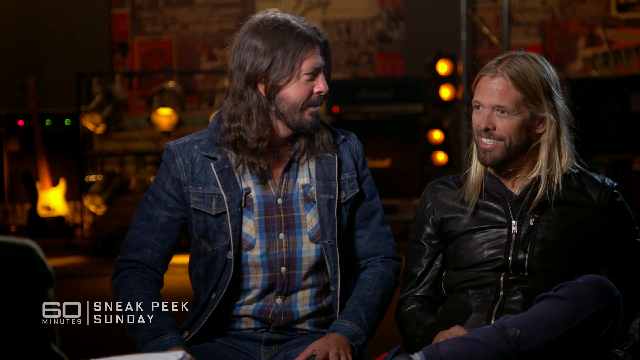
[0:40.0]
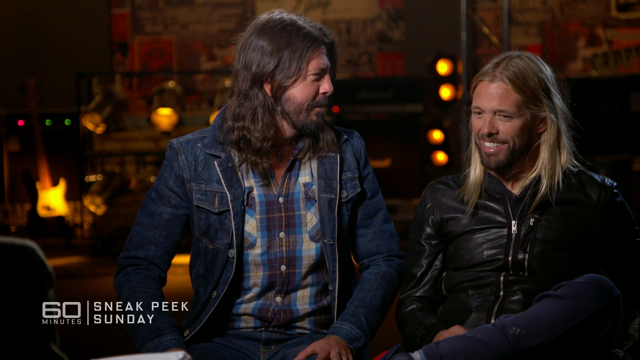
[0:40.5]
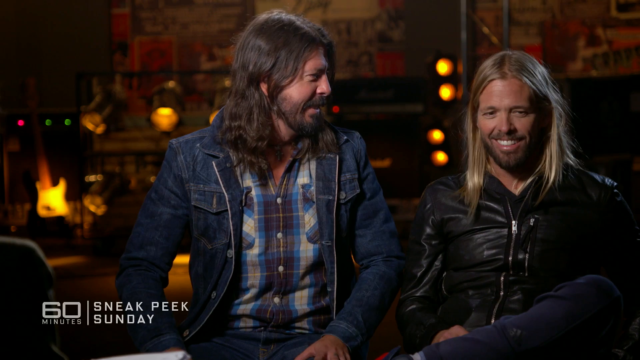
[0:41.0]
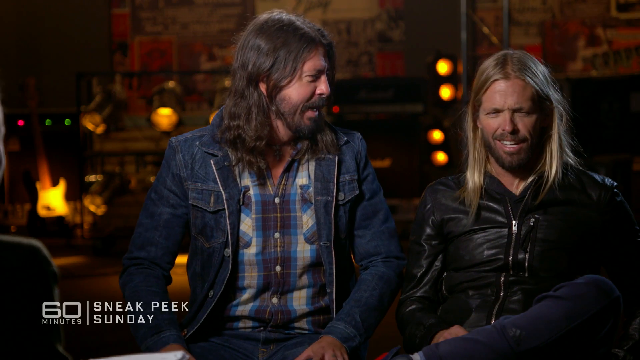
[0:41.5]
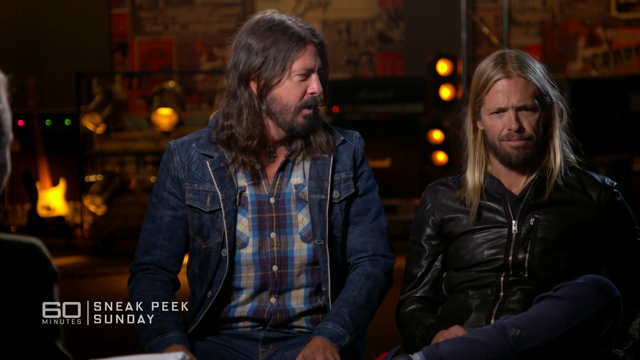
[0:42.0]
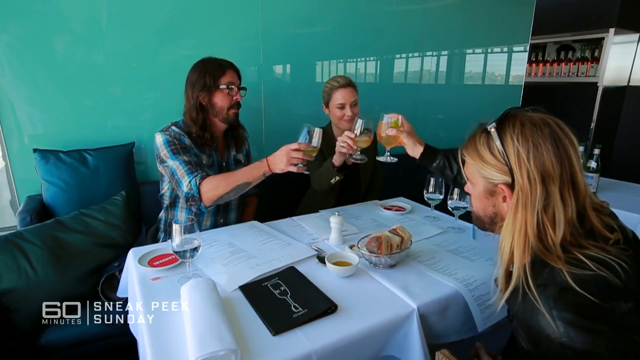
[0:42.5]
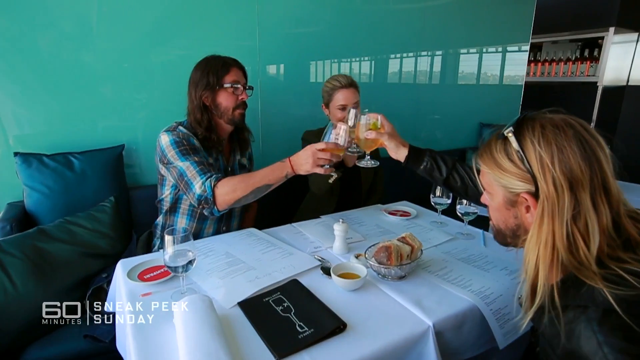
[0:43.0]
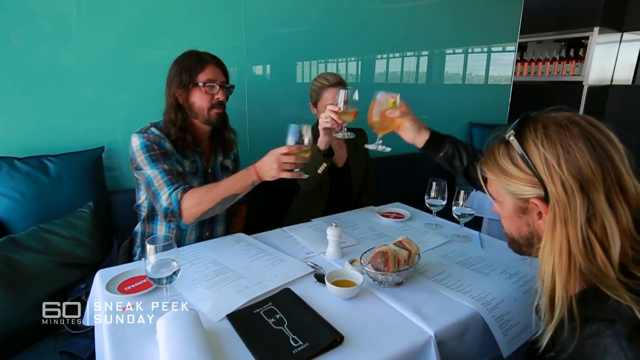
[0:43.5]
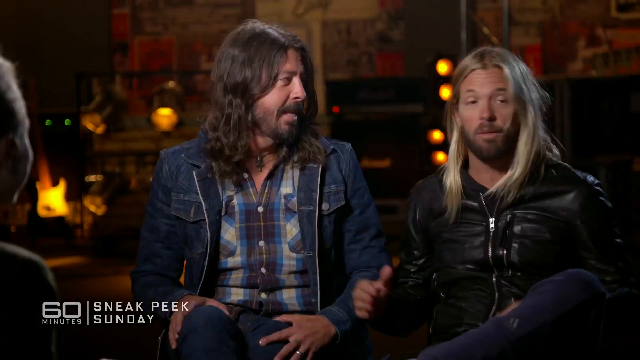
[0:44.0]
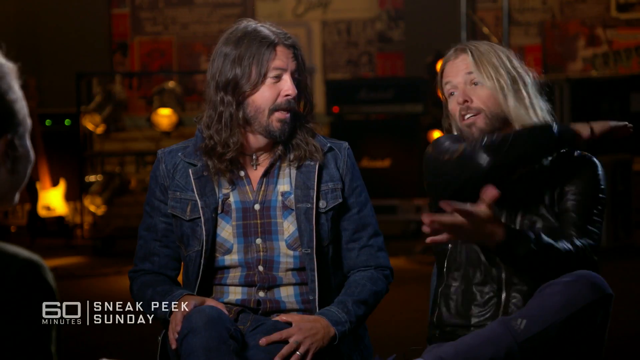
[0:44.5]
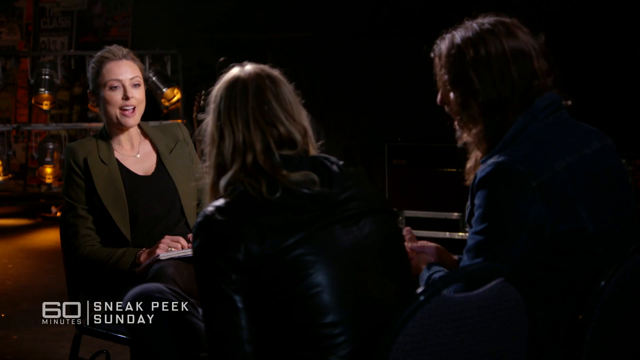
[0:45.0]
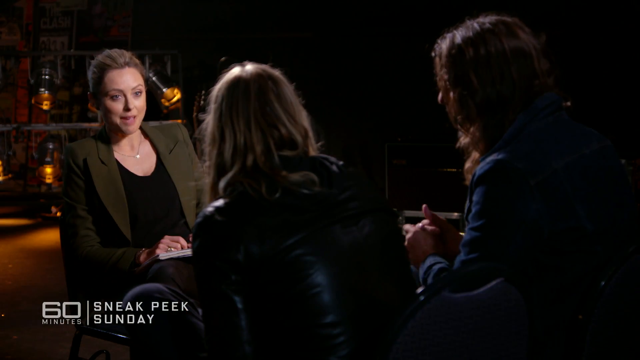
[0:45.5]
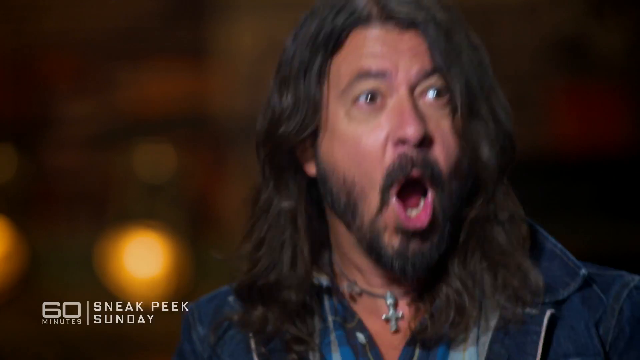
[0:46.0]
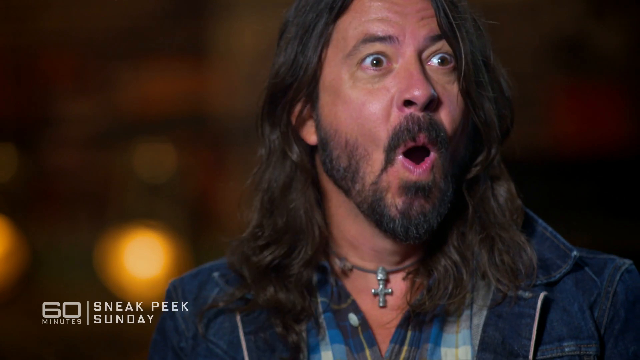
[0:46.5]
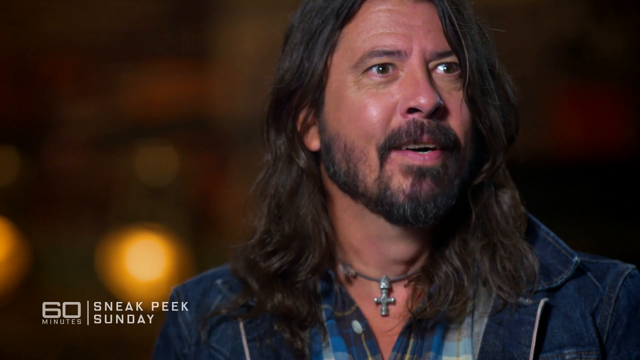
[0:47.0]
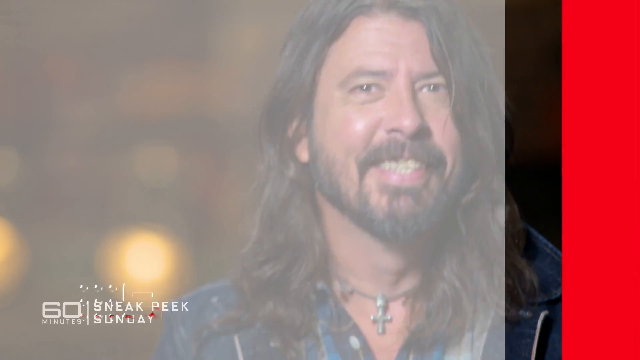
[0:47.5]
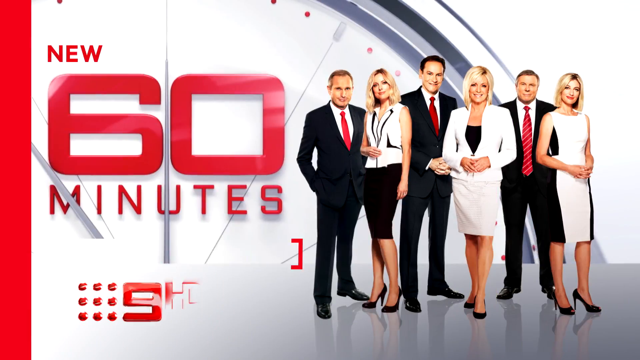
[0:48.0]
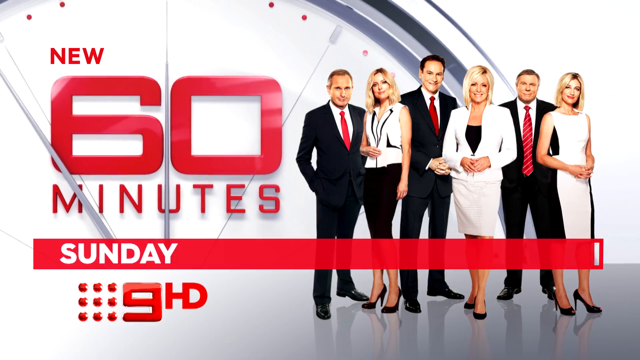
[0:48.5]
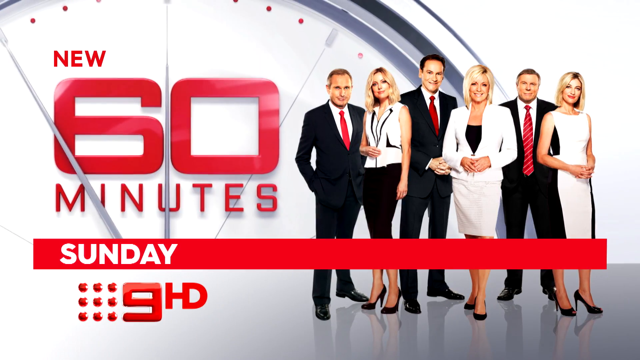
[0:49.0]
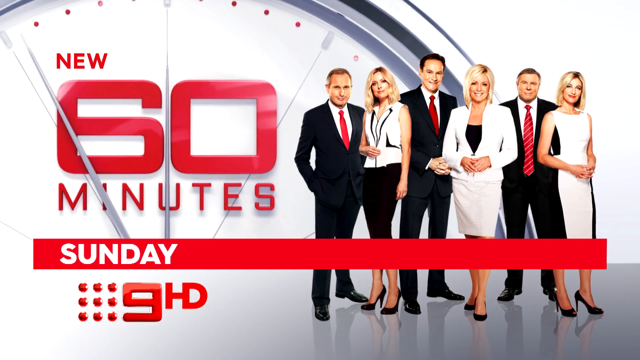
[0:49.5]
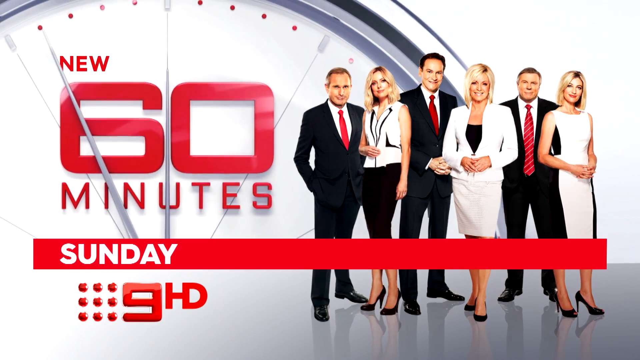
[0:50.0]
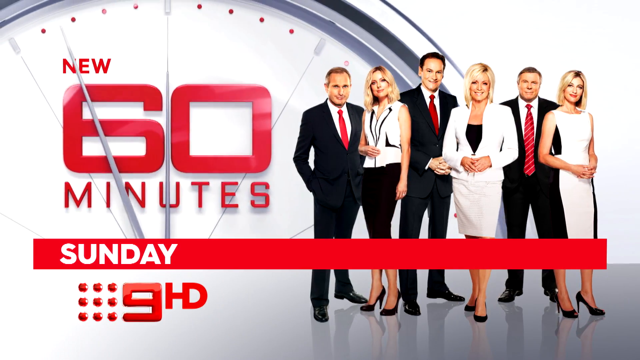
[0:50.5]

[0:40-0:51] The group is in a restaurant, making a toast with drinks that could be wine or juice, and there is a plate of food. The walls are a shiny shade of green. The man in the leather jacket now wears glasses on his head. Their table is white and very clean, and a menu is in front of the long-haired man in the denim jean jacket. They look very happy as they talk.